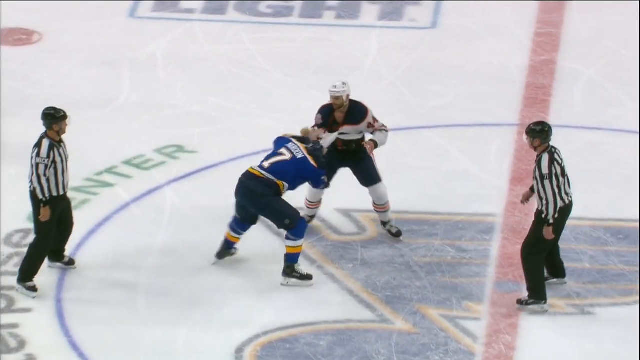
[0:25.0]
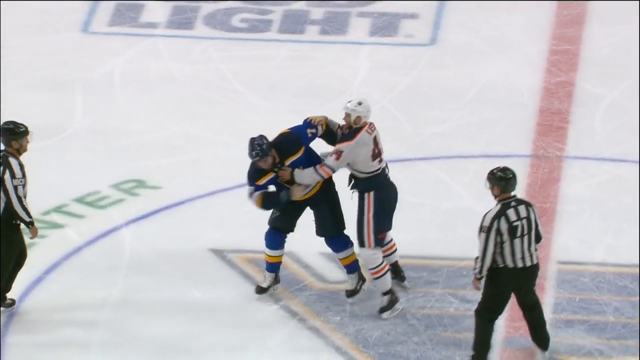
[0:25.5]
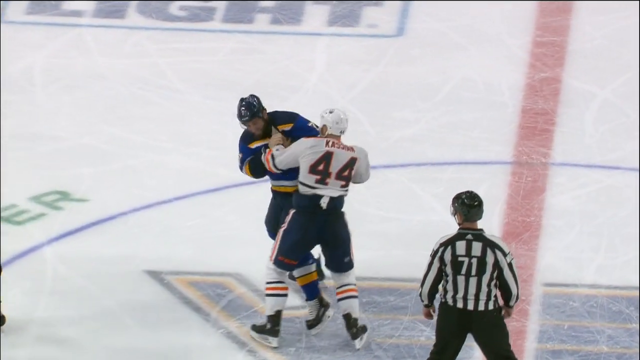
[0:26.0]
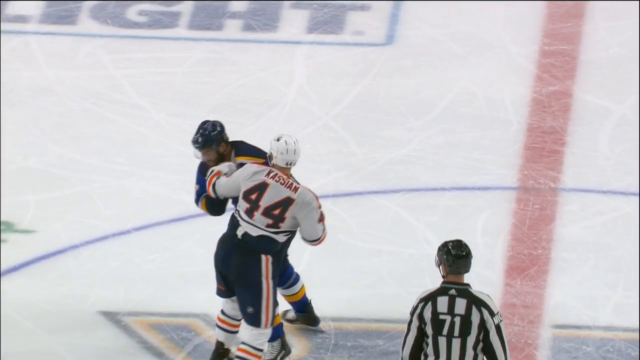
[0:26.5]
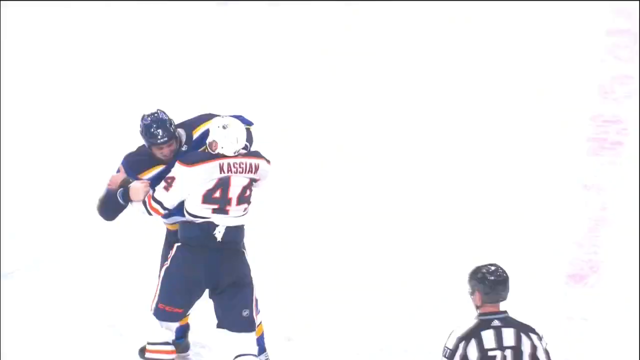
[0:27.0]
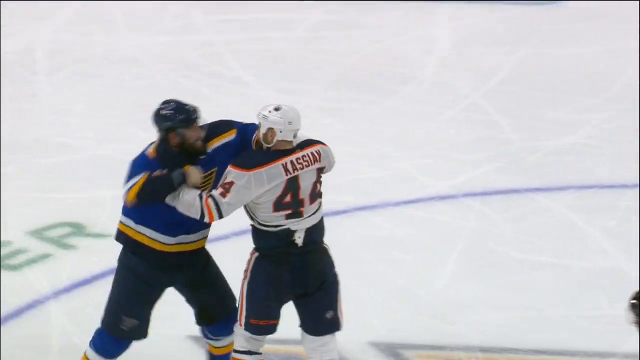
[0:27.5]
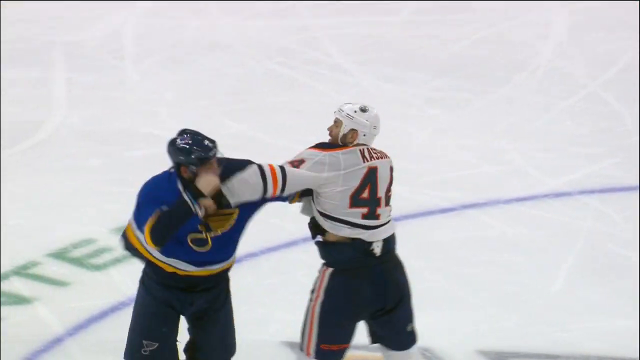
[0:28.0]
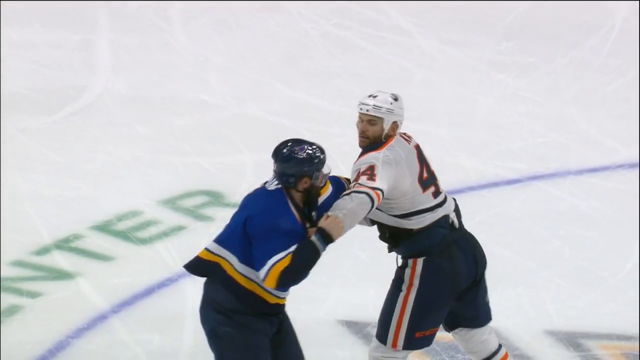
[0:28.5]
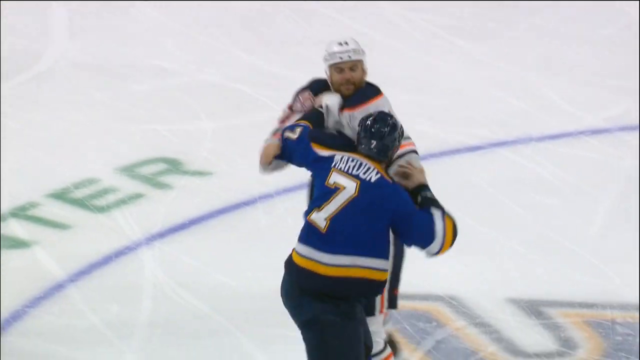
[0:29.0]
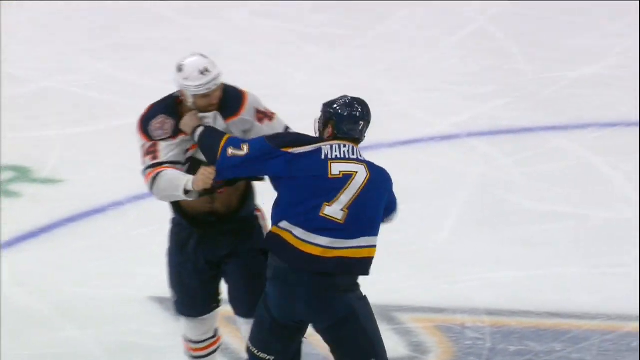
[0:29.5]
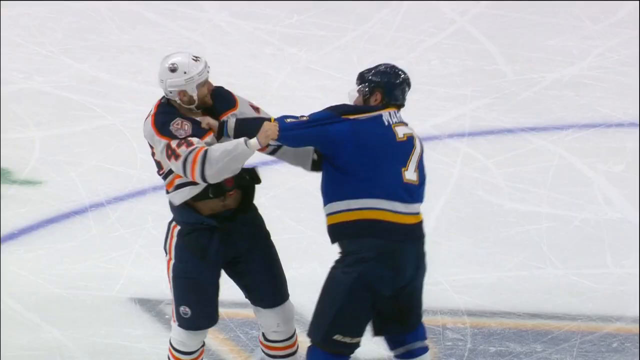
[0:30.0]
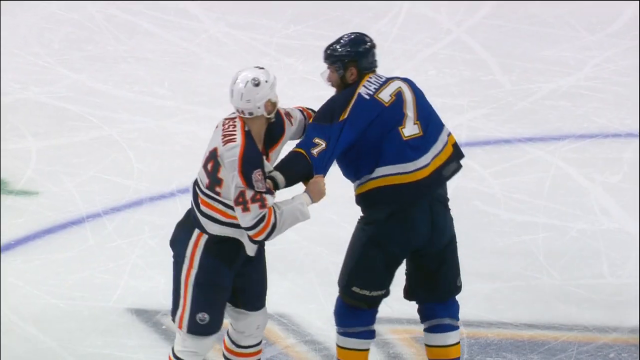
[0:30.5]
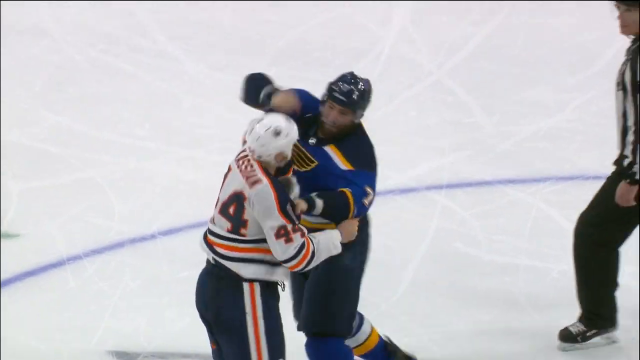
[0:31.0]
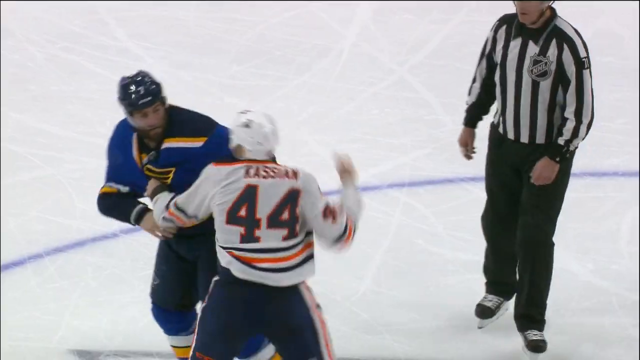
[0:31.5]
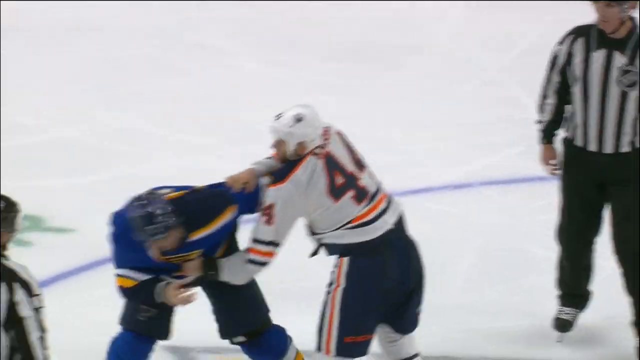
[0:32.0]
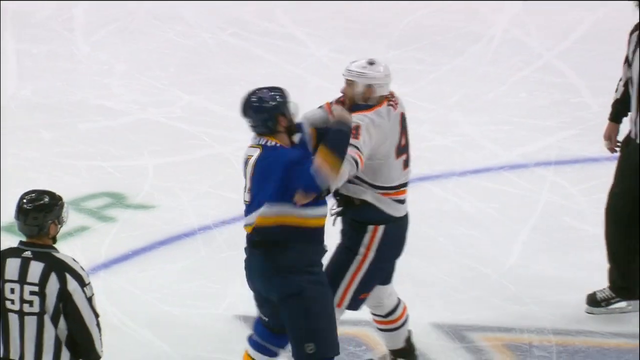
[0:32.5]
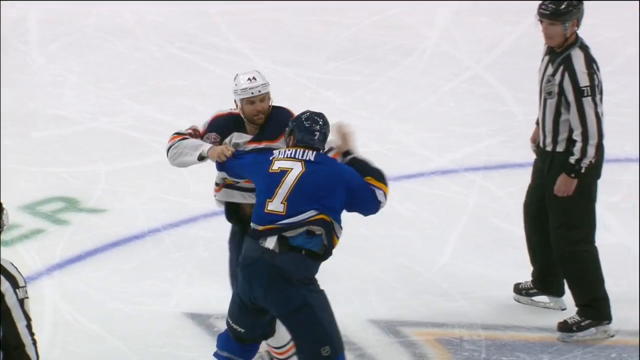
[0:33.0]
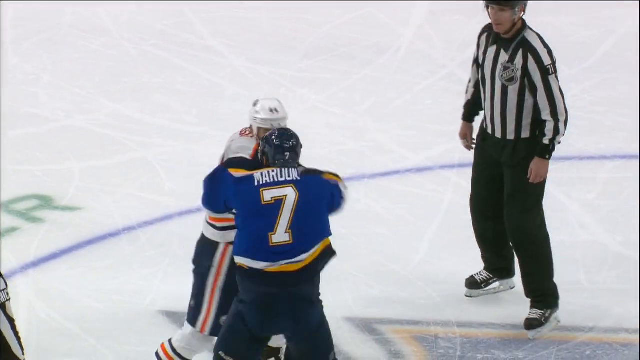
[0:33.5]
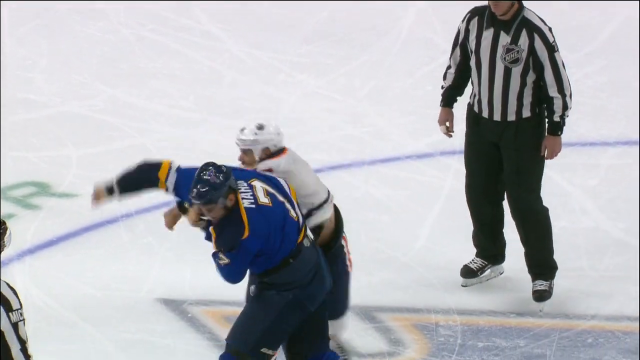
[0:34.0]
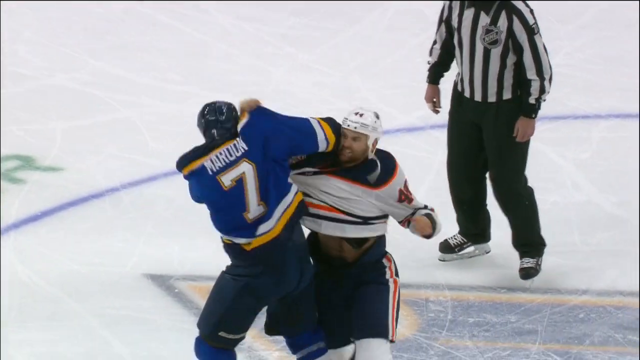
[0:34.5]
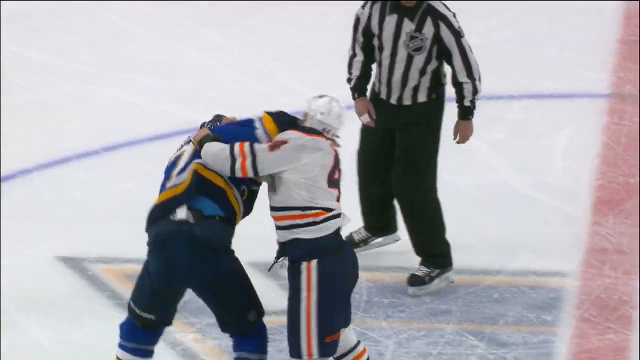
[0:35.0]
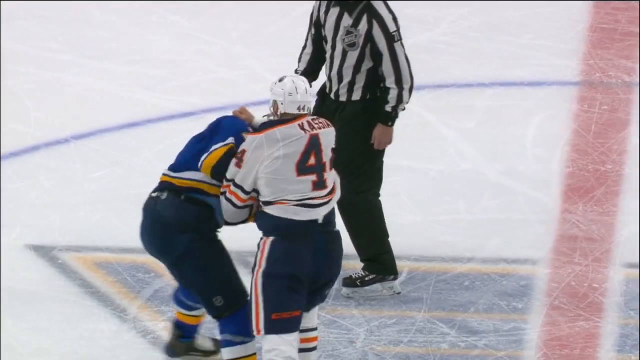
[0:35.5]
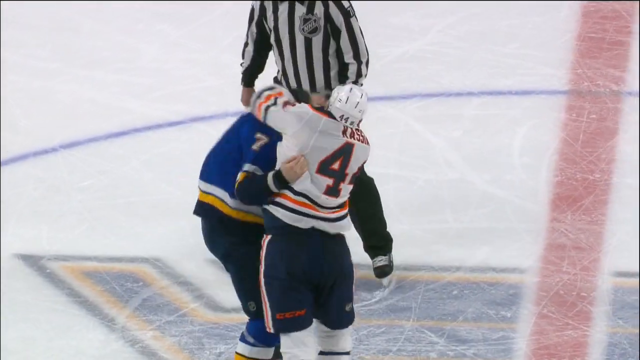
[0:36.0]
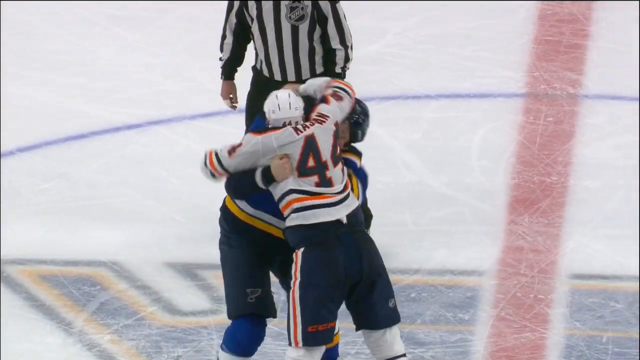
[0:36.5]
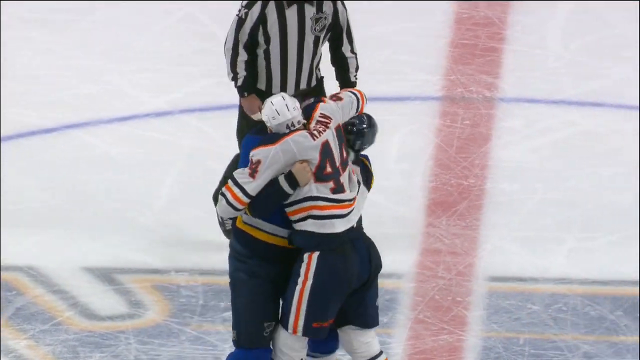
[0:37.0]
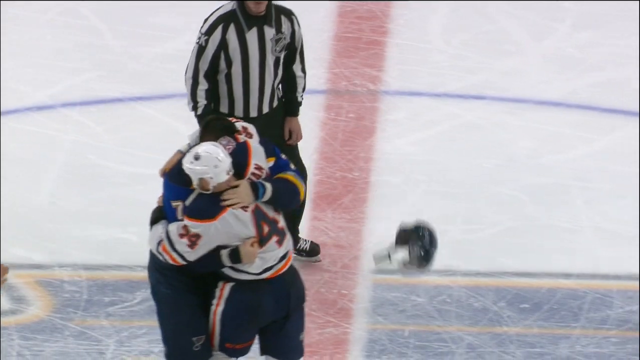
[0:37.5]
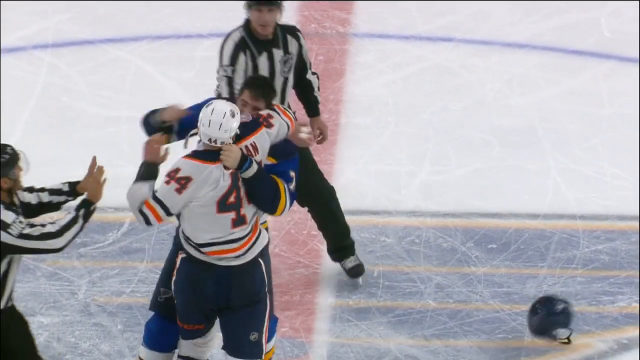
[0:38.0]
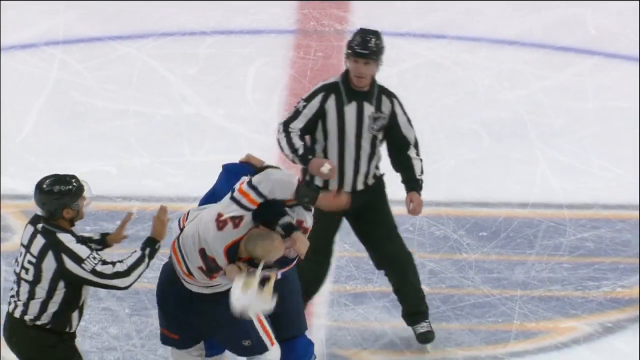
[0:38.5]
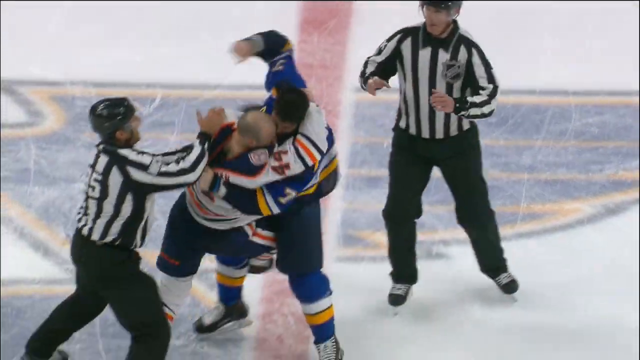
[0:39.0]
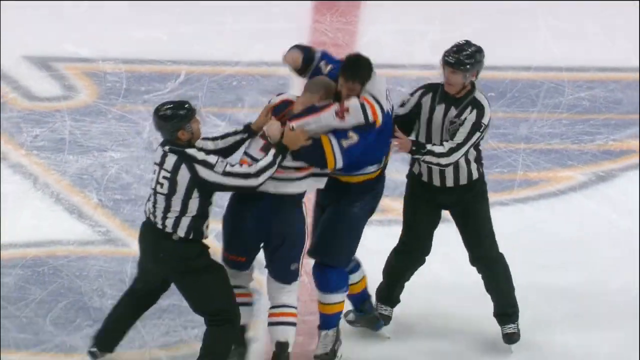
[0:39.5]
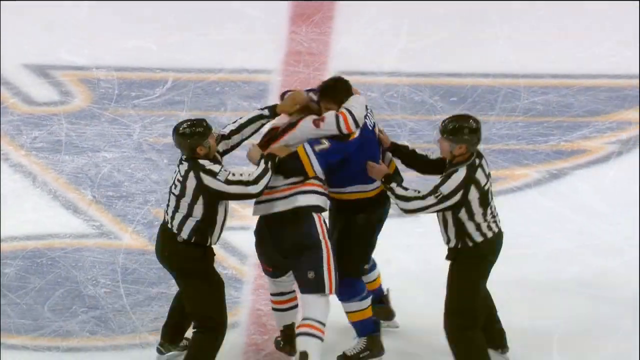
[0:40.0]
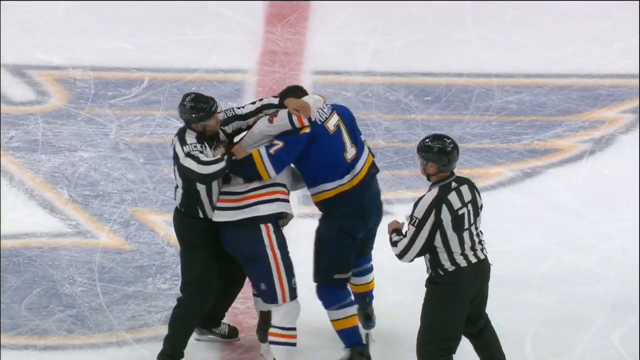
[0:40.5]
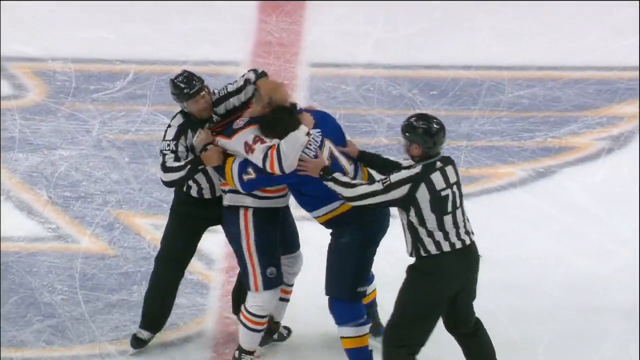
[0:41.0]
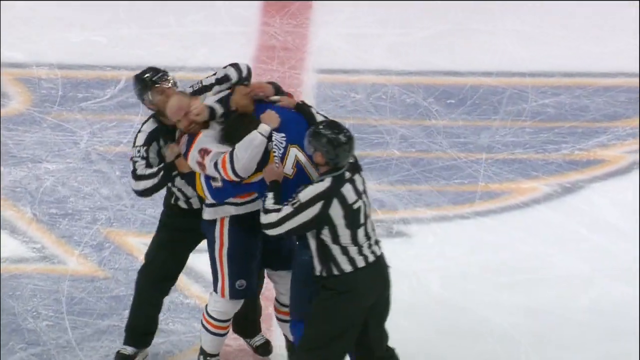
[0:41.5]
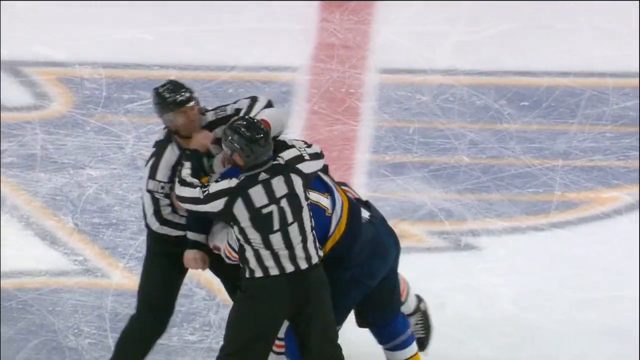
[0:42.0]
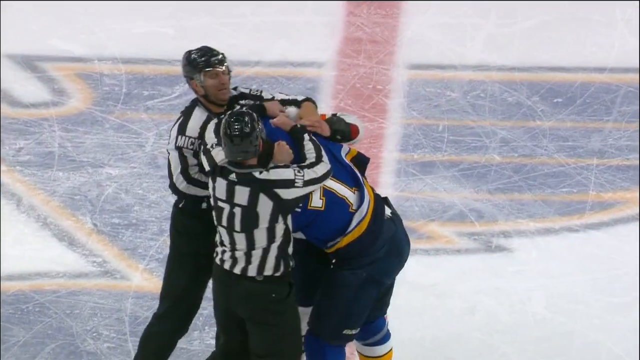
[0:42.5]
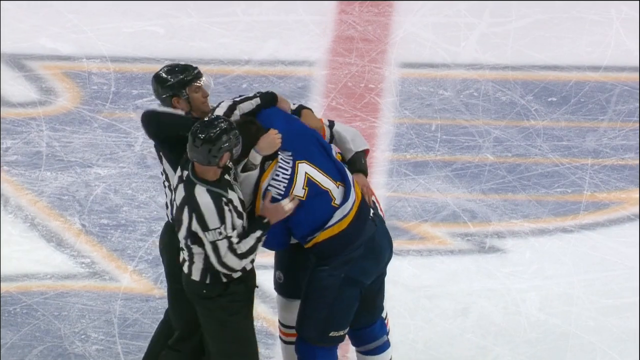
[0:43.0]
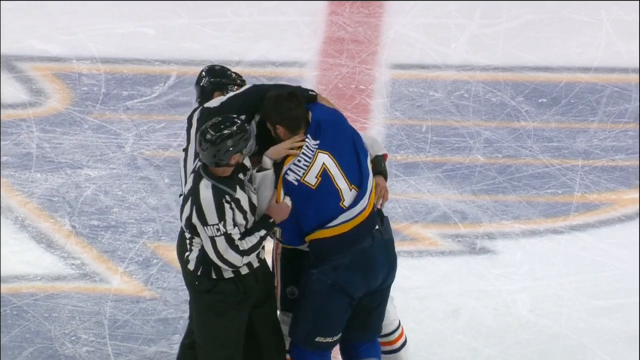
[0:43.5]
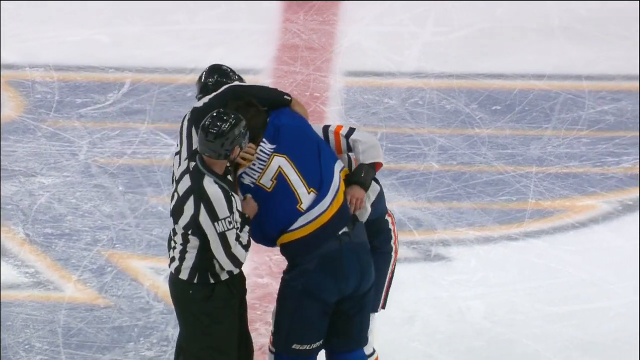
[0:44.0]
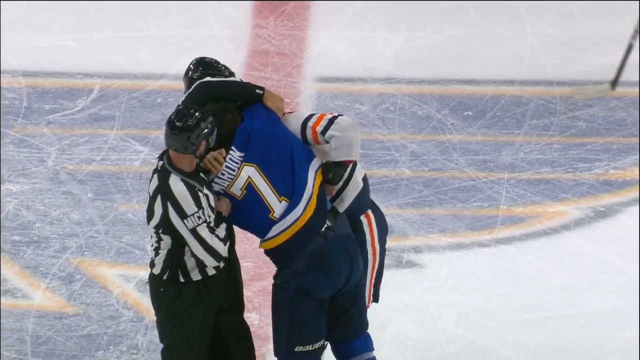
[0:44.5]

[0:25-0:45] The two hockey players hold each other and attempt to throw punches, exchanging punches in the center of the rink while standing on the logo. Both players' helmets fall off, and the two referees step in to stop the fight. Kassian is number 44 for the Edmonton Oilers, and Maroon is number seven for the St. Louis Blues. The fight apparently ends in a draw, with both players still holding each other with their helmets off. The shot is very zoomed in, so only the two fighters and the two referees are visible; no other people, fans or equipment are seen until the very end, when one other player skates toward the two combatants. The whole scene takes place at center ice.